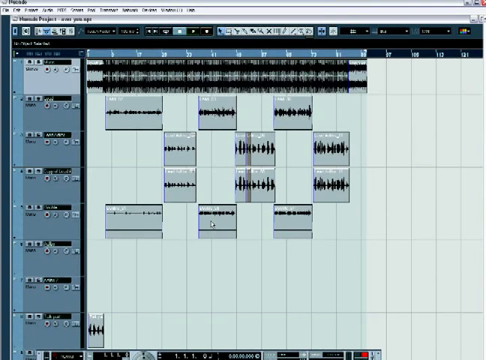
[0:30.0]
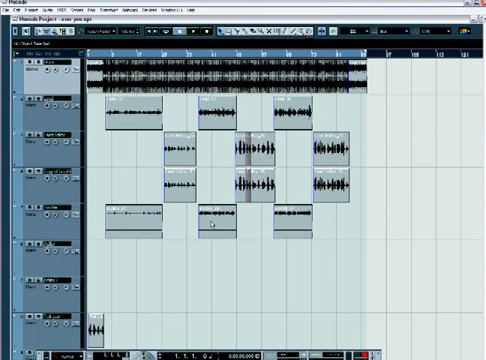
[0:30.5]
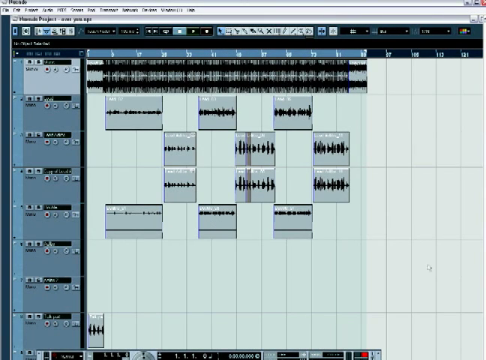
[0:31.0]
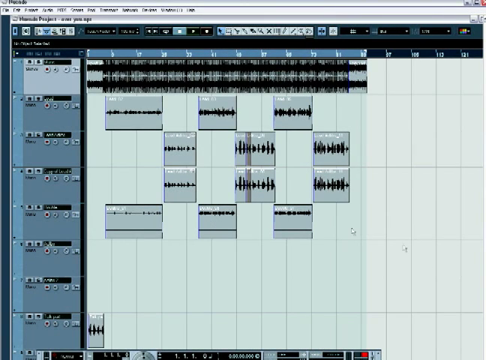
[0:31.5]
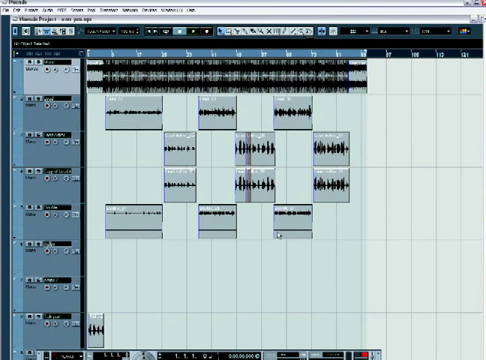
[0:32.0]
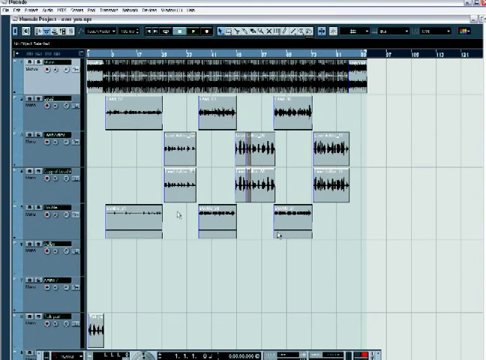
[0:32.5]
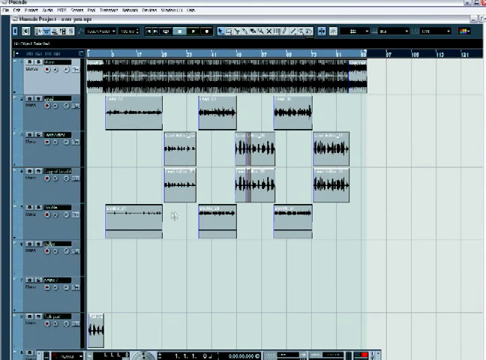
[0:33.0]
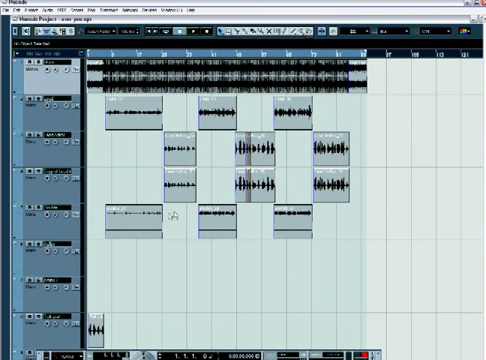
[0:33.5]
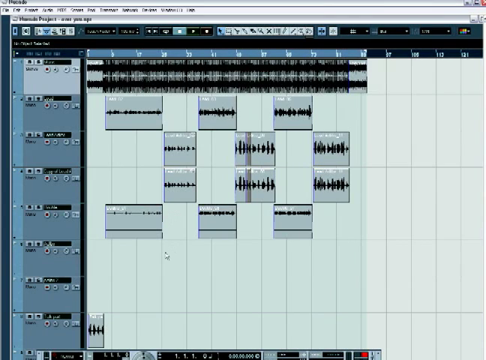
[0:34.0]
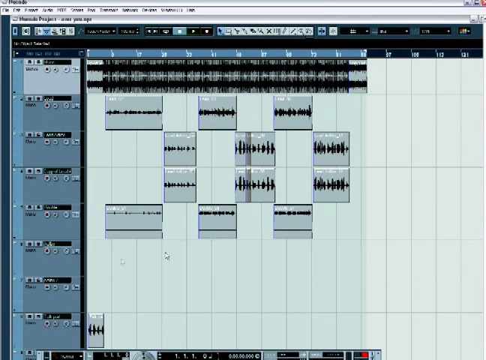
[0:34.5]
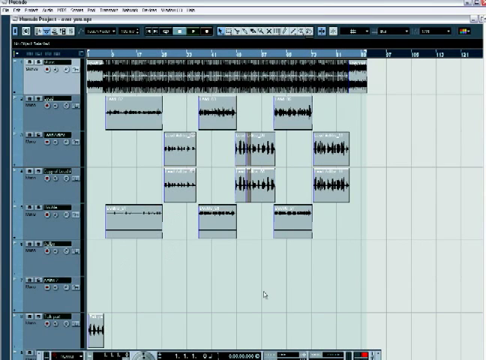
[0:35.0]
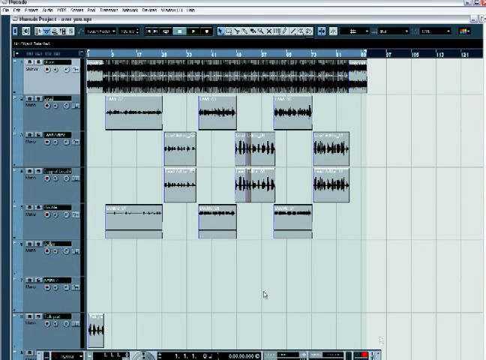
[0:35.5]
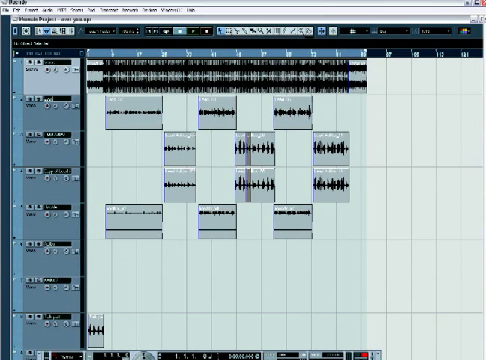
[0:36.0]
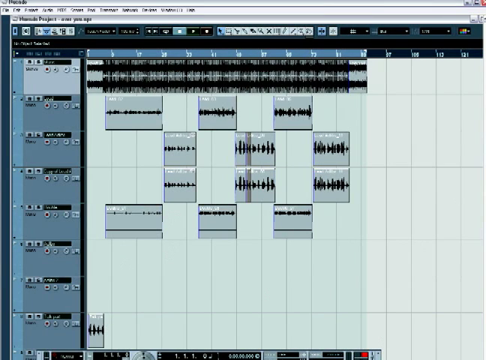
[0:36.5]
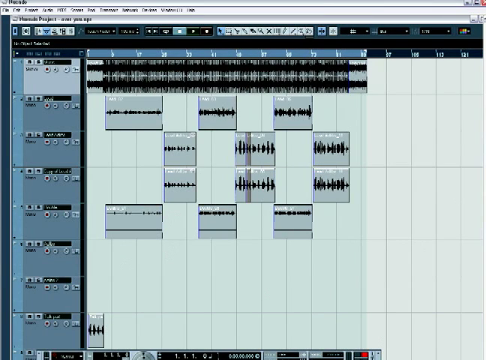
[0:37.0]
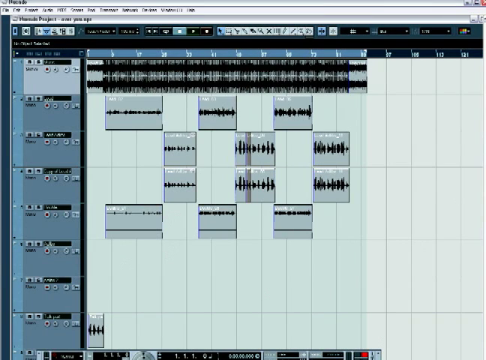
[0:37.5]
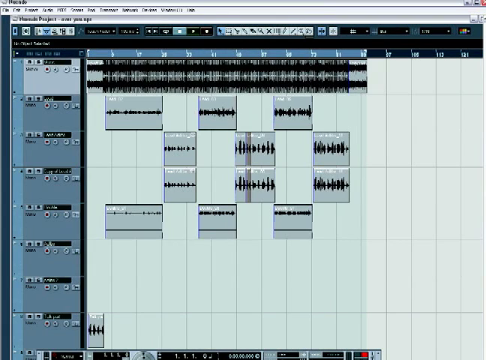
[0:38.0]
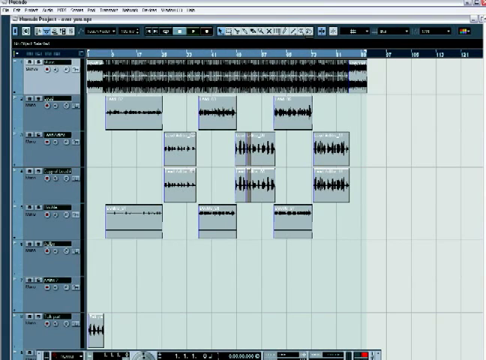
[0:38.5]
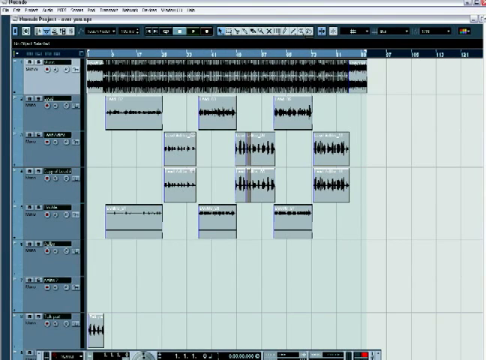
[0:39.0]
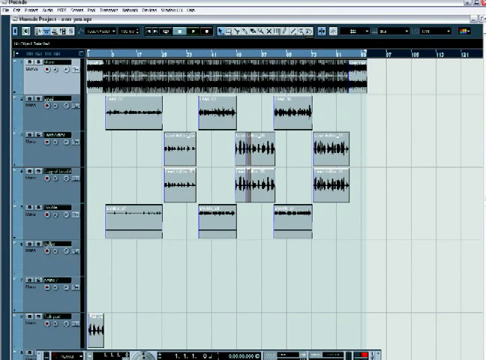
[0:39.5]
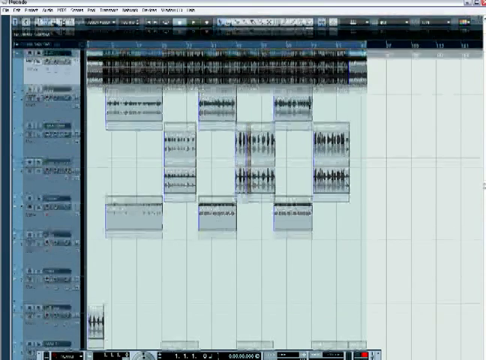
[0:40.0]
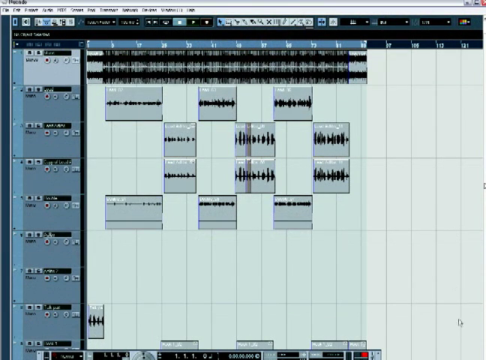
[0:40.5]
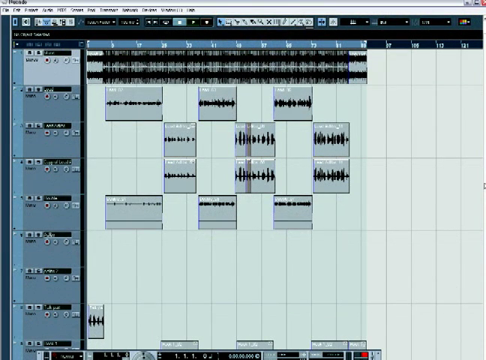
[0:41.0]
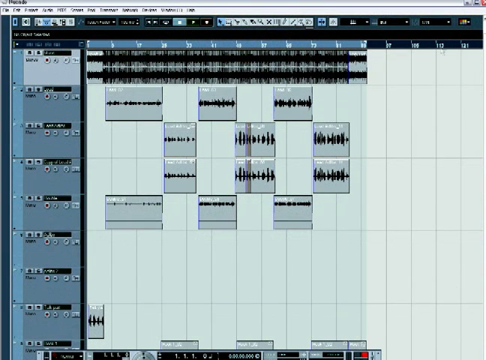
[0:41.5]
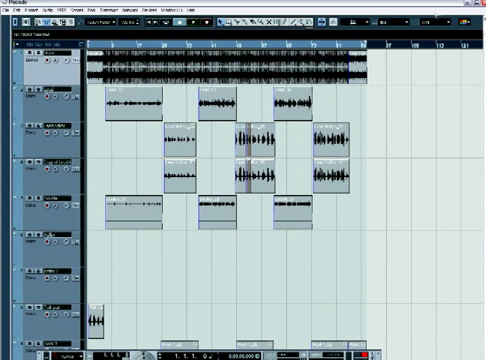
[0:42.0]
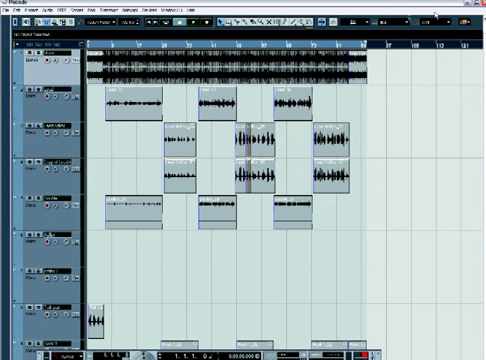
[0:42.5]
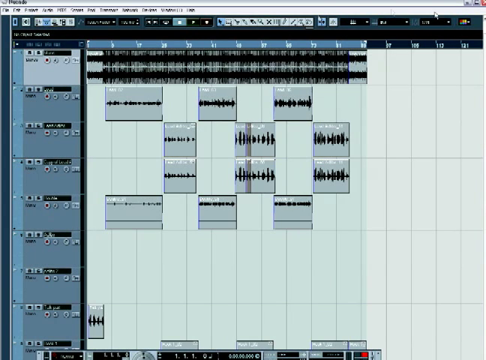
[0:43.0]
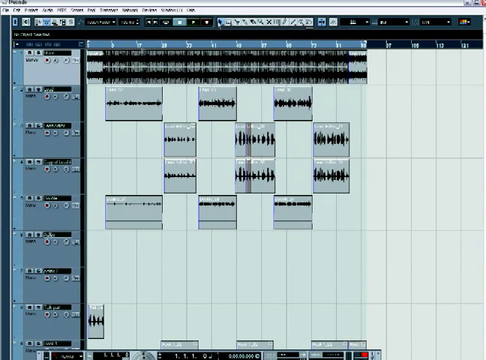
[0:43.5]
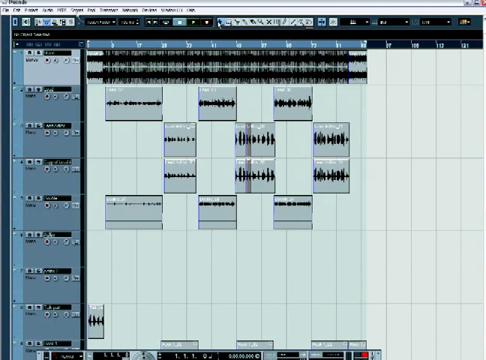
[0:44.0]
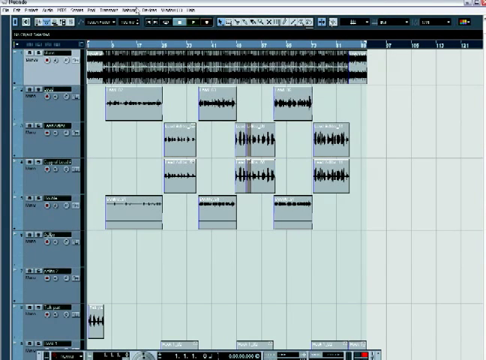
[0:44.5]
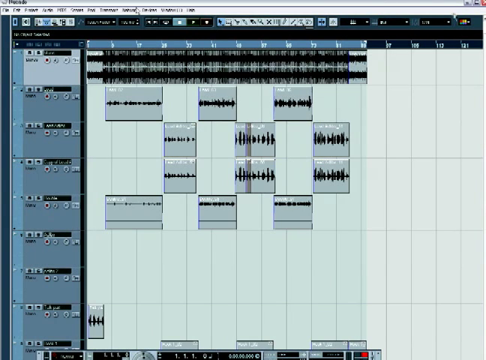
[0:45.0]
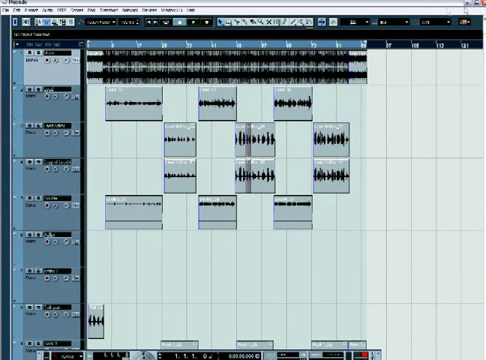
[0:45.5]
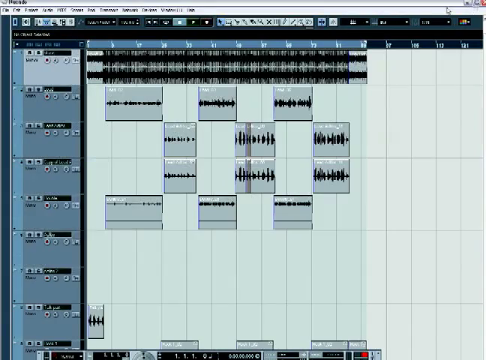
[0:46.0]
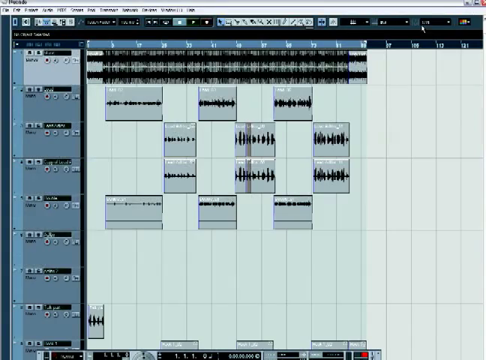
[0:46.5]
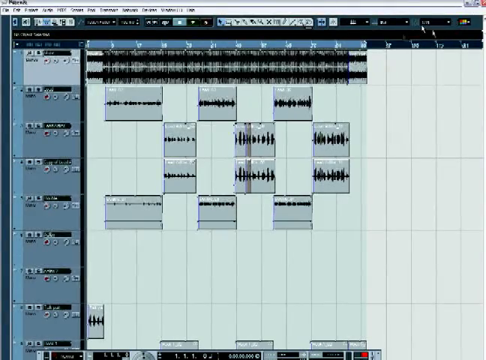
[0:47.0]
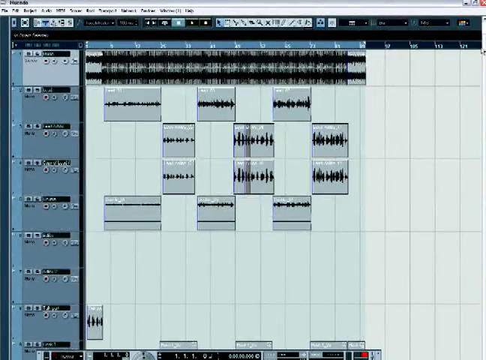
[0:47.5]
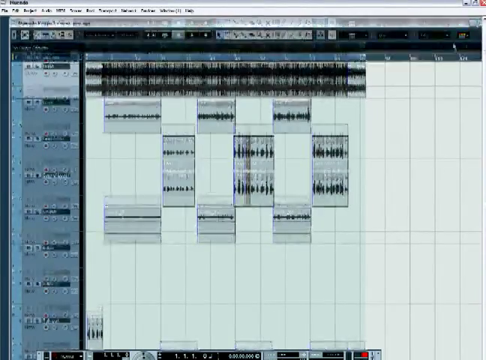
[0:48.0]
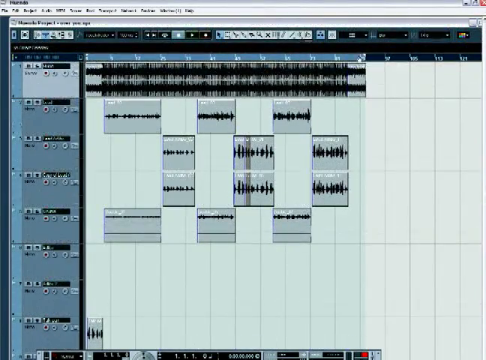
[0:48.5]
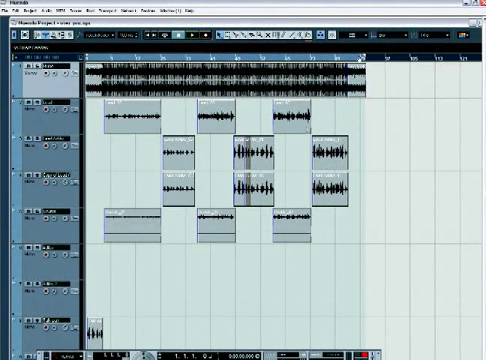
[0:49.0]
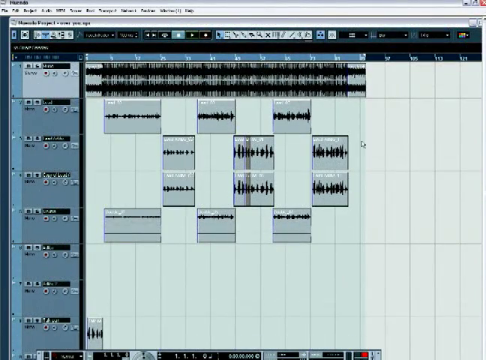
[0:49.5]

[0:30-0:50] A screen recording shows a very low-resolution, vintage computer operating system. The open window is some kind of music or sound editing program with multiple music tracks; only six of the tracks have anything in them, with the two toward the bottom empty. A white pointer cursor teleports across the screen from the bottom right corner, slowly making its way toward some empty space on the fifth music track, then moves down to the sixth and then seventh track. The cursor then teleports to the top right corner and clicks on a context menu that is out of frame, which makes a bar at the very top disappear and the work studio space increase in size. The mouse teleports to the left side of the screen and back to the right side, mouses over the maximize button of the open window and clicks it, maximizing the window. The cursor then teleports from left to right across the screen again.